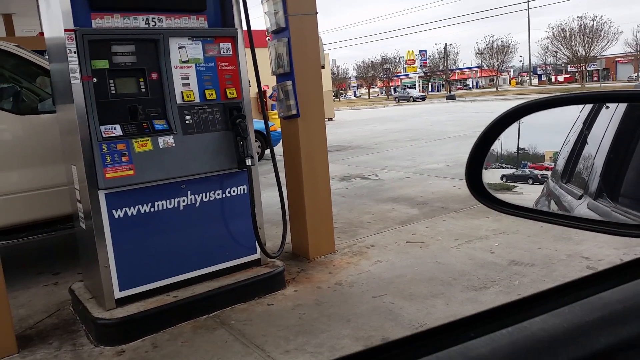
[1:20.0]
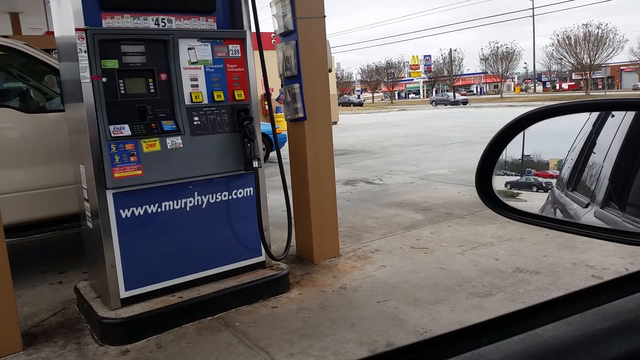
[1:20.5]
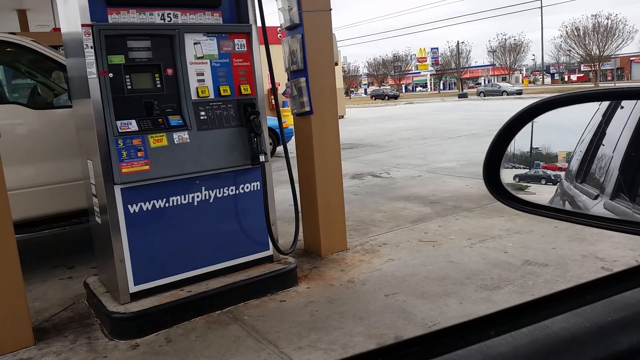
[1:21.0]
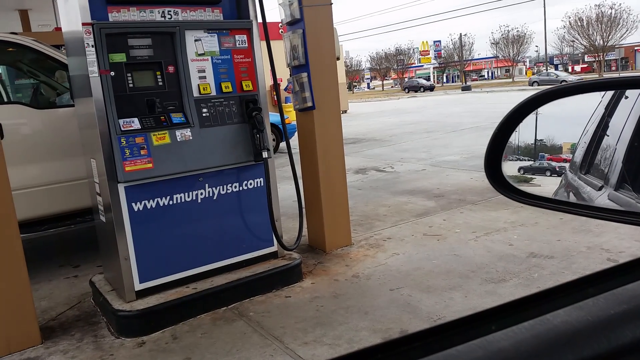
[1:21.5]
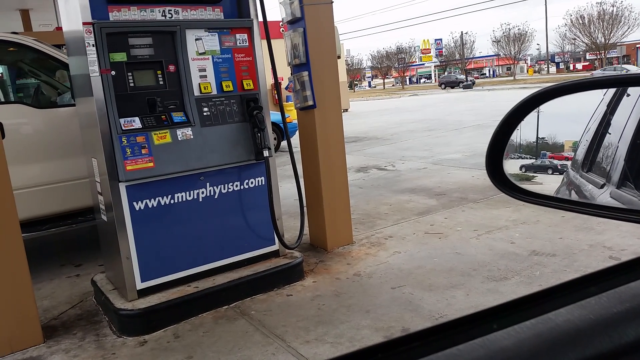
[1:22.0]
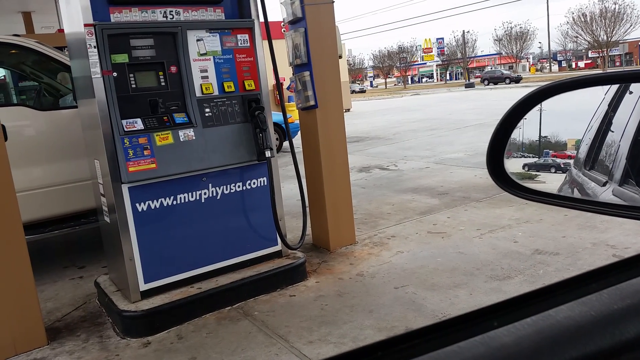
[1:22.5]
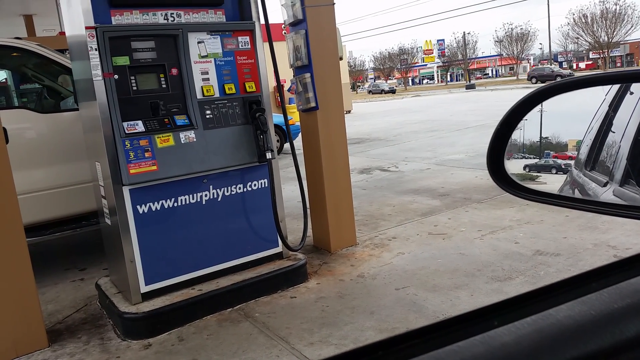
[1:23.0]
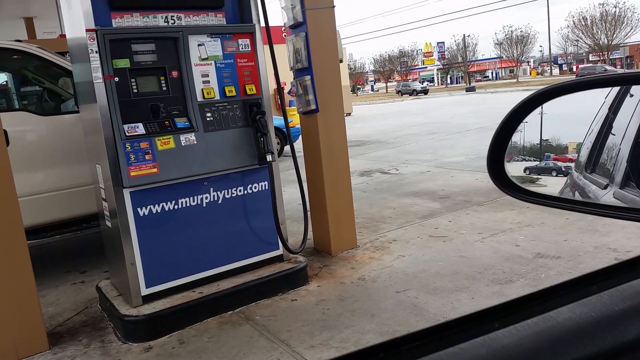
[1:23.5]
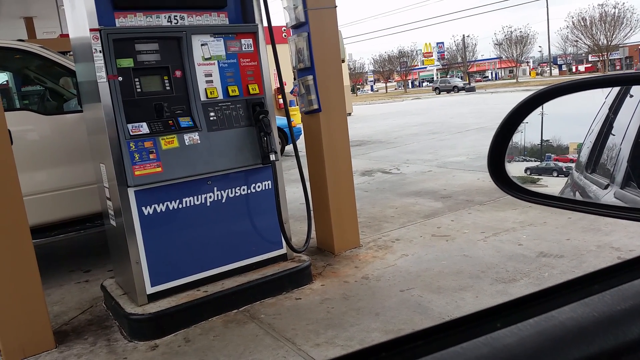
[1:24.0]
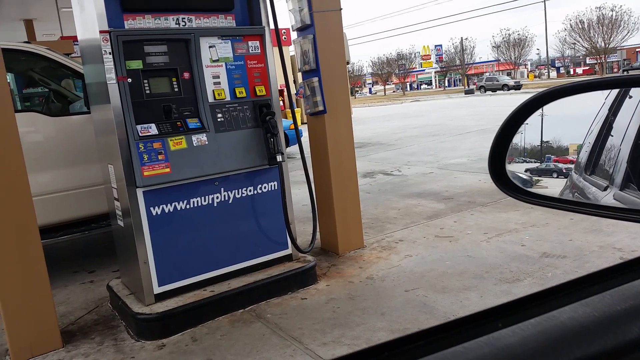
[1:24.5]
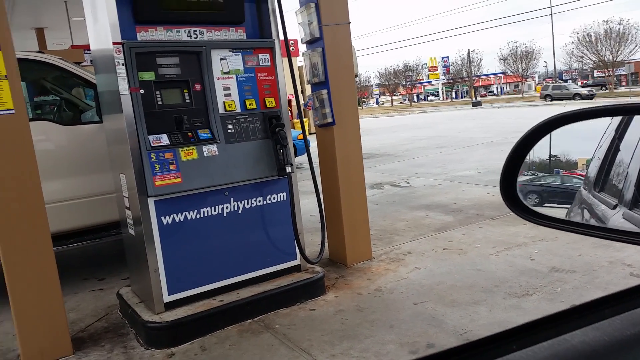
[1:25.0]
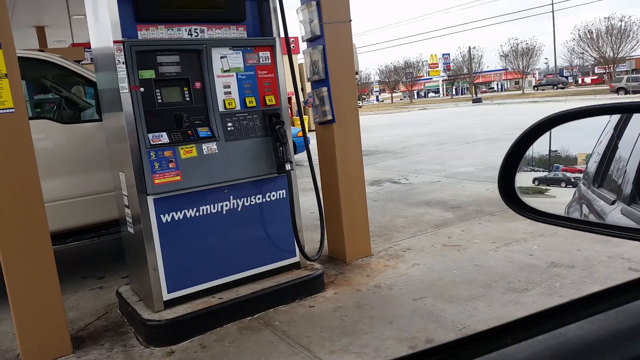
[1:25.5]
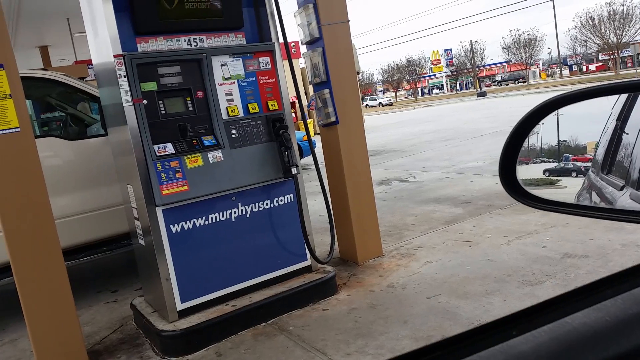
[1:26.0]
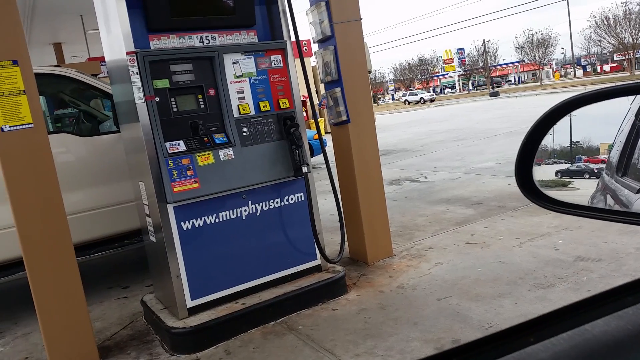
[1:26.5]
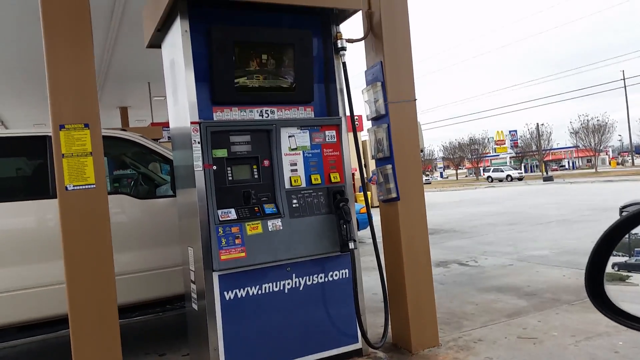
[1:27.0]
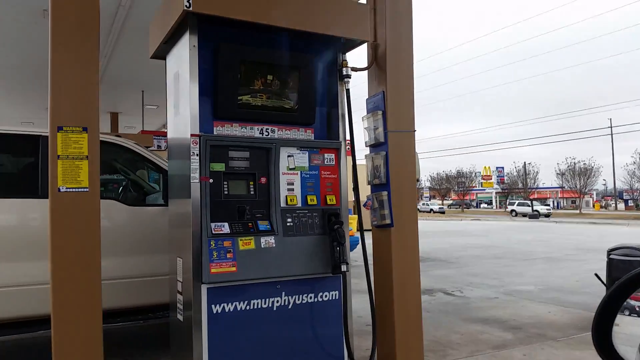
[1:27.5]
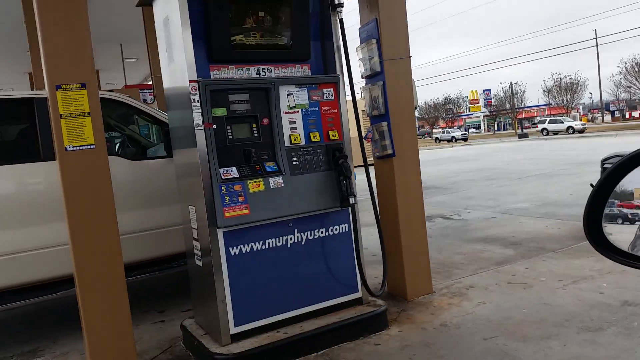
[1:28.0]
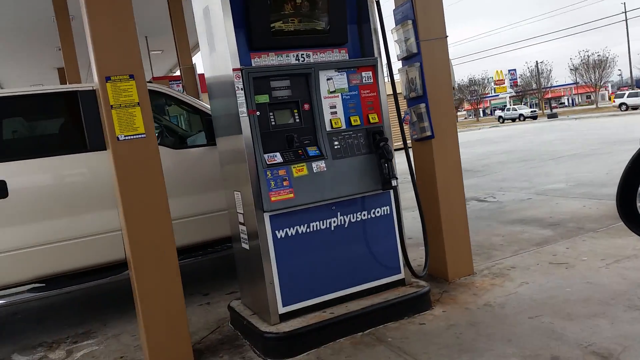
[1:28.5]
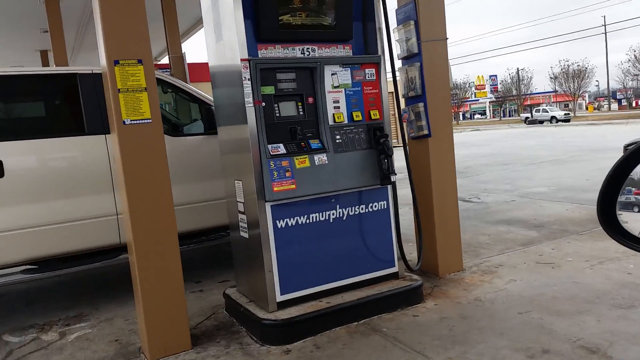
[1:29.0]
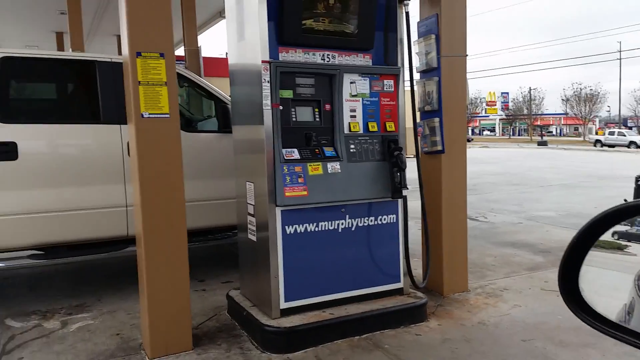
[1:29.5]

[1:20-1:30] A white truck has pulled up at the second pump right next to the person filming, who is filming out of what is apparently the driver's side window. The white vehicle's driver cannot really be seen, but the light and shadow change and the driver gets out. The person then films part of the image on the pump, and keeps filming their side mirror showing the traffic going by behind them.